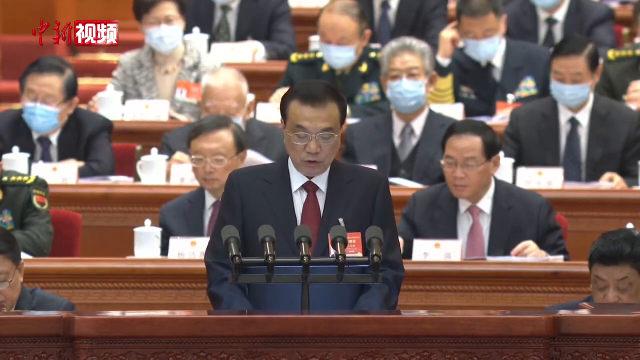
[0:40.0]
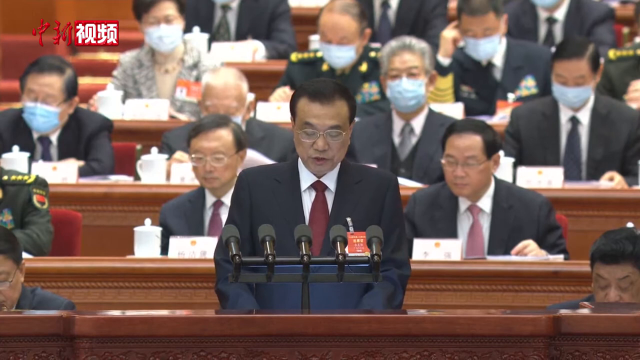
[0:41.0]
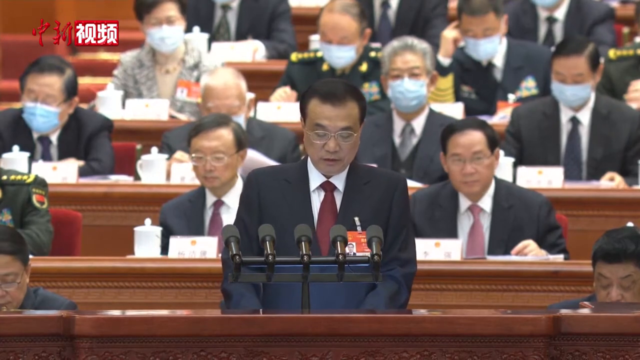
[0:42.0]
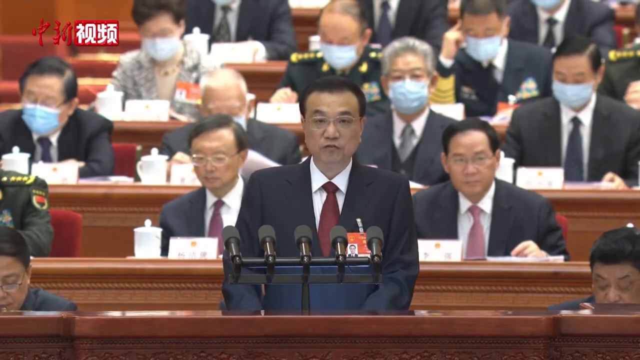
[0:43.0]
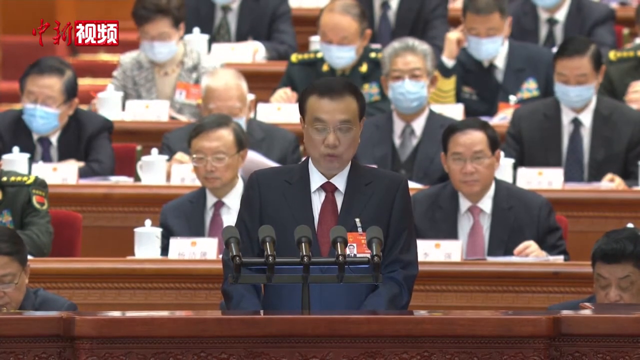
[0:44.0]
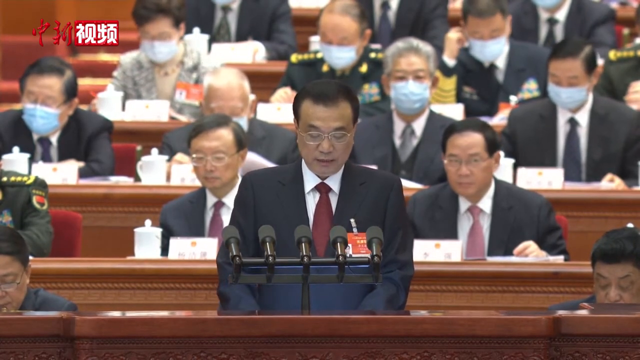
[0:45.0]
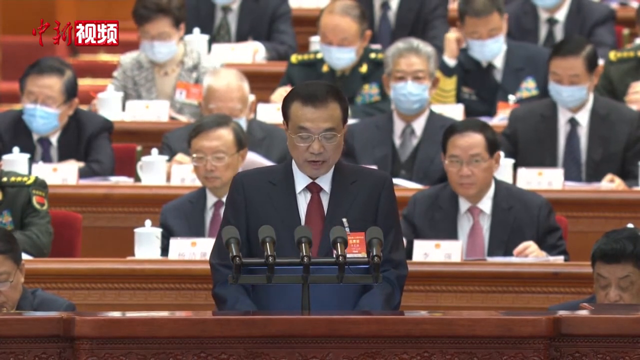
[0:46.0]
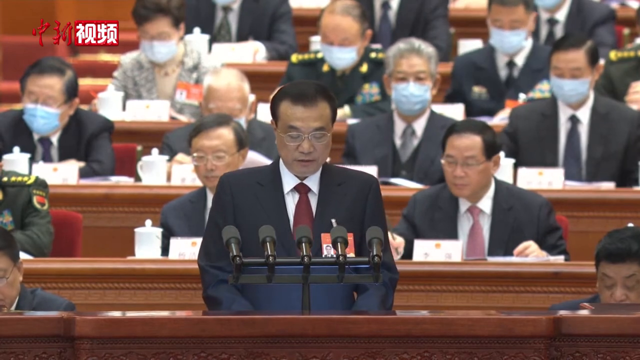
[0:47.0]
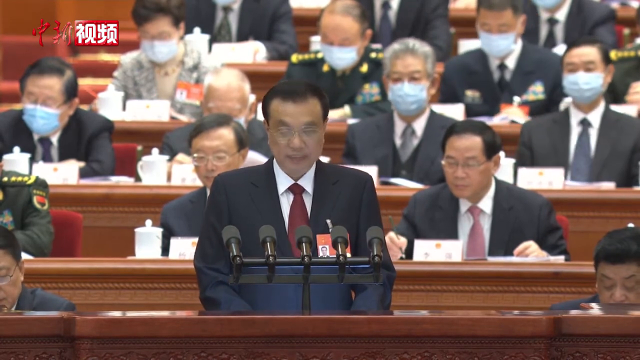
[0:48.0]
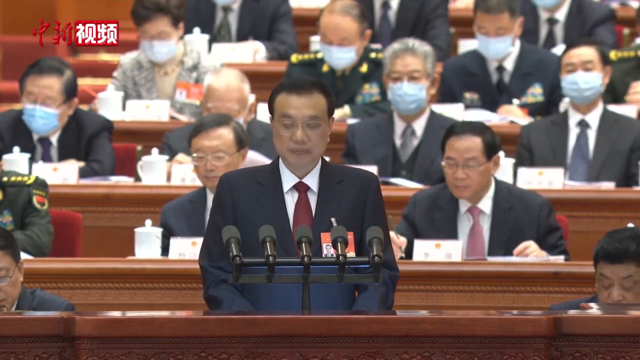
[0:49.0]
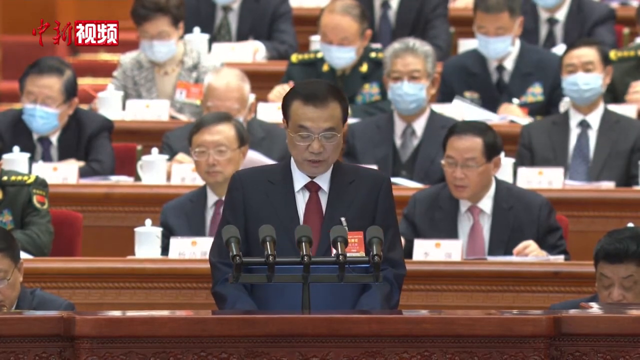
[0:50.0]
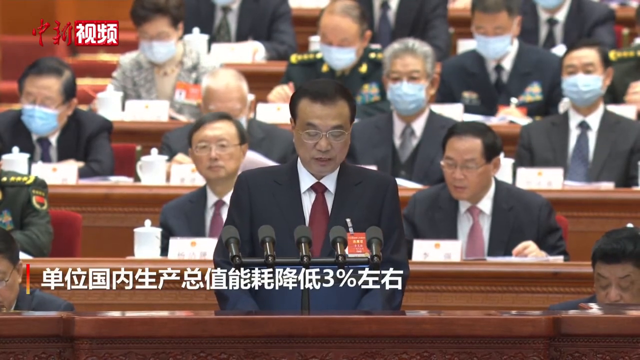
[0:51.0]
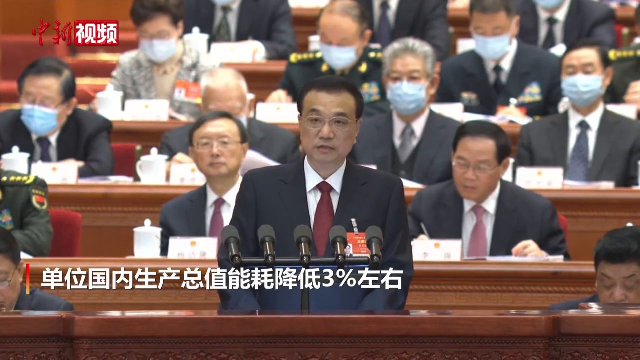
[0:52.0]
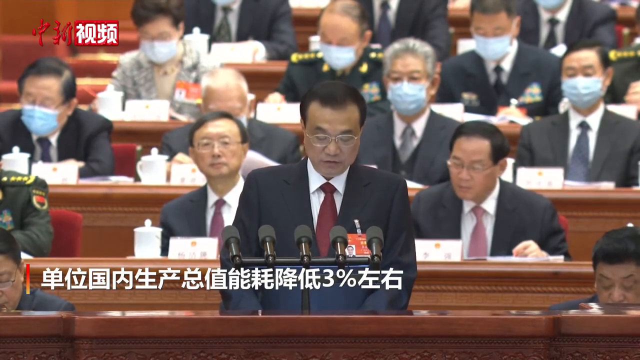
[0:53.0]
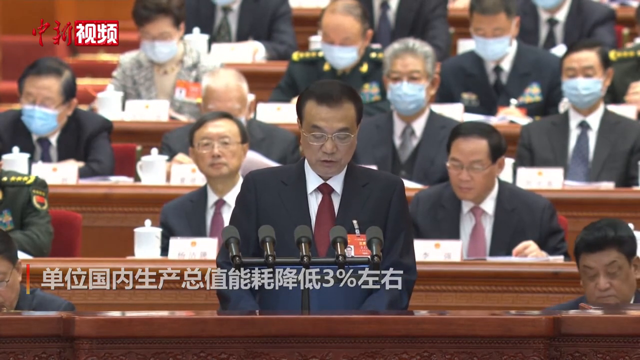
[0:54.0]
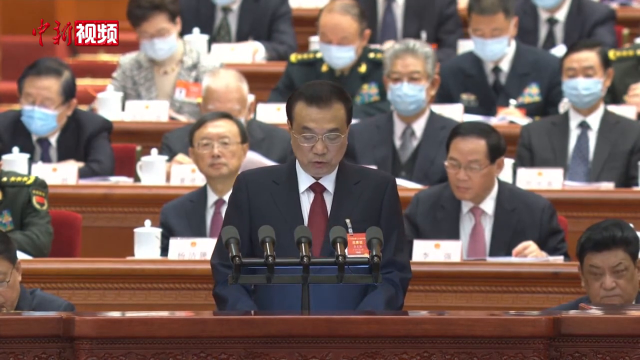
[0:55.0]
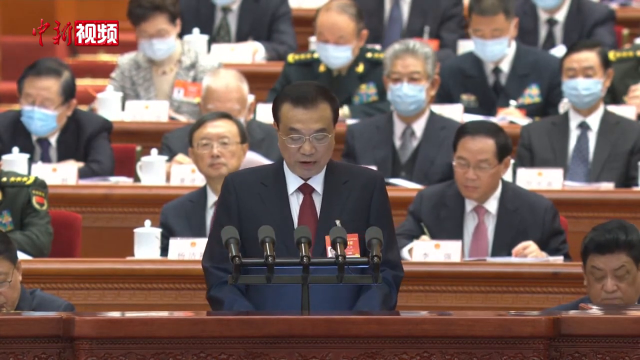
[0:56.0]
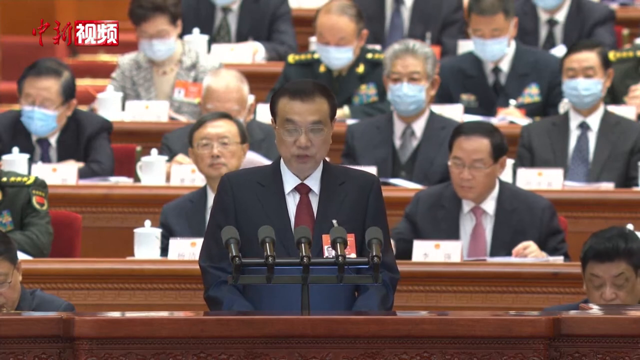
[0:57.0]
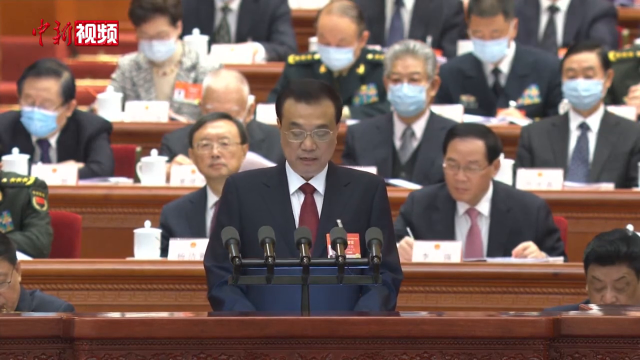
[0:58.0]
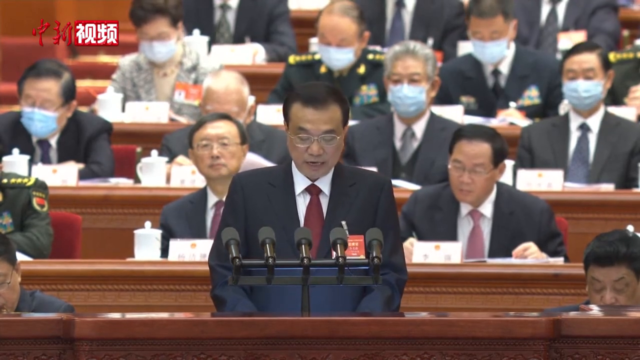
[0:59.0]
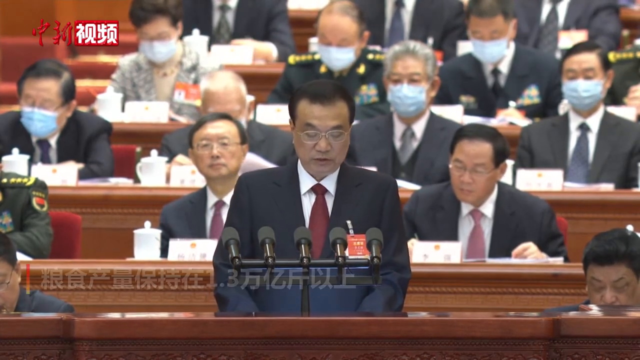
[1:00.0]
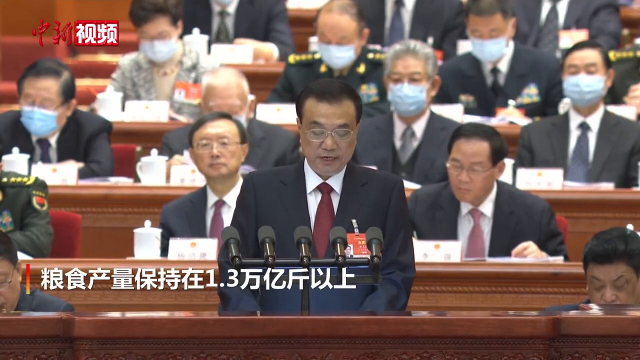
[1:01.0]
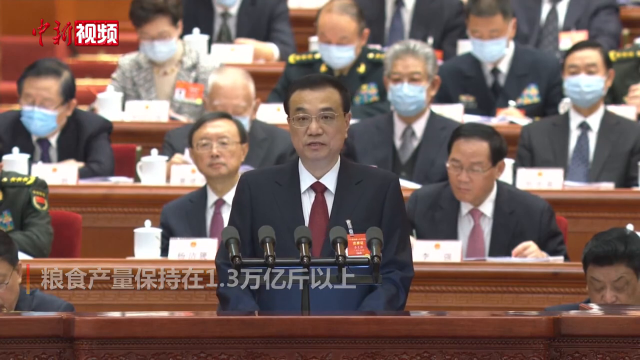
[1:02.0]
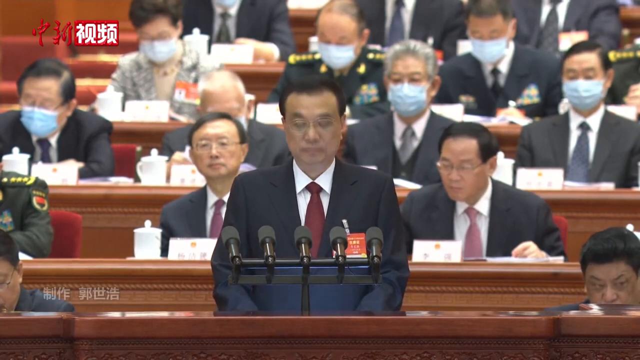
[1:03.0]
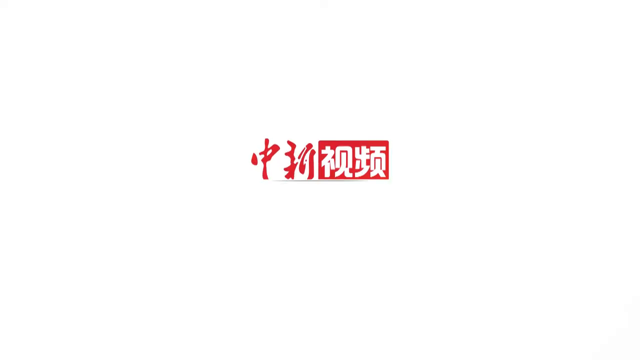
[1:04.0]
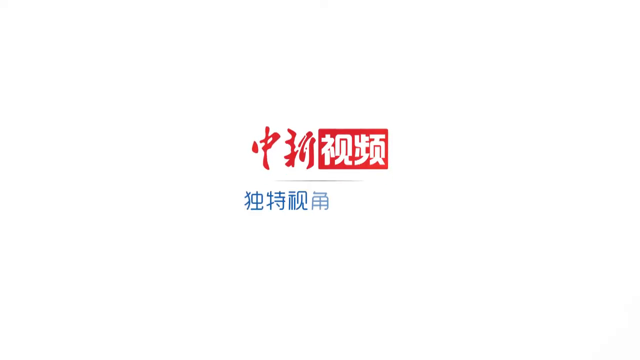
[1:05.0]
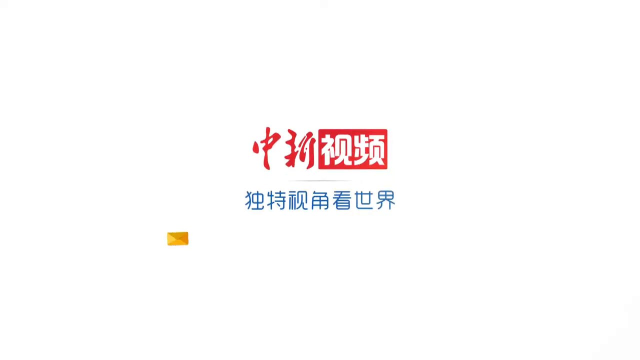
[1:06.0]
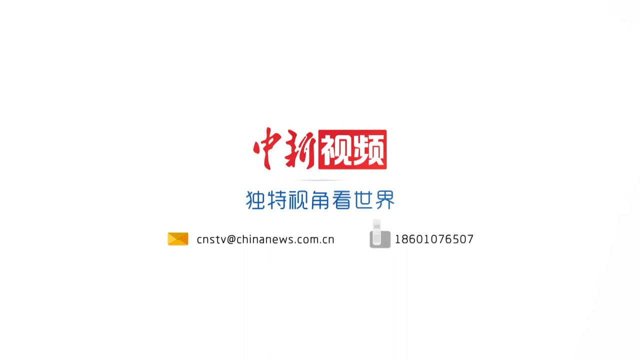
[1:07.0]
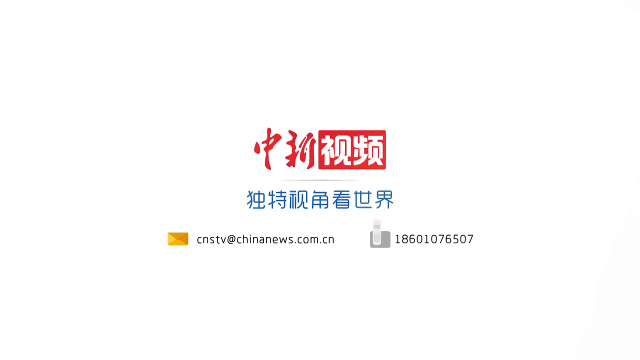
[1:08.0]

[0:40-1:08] A man speaks before a large group of people and appears totally immersed in his words. He looks down at some notes in front of him, or maybe an iPad, and looks back up at his audience as he speaks. The people behind him all wear work attire; there appear to be men and women sitting in rows of desks. Some wear face masks and some have no face covering. All of the men appear to be wearing black suit jackets and neckties. Text in a global language pops up in the upper left and lower left corners of the video. The man continues speaking, and then a widescreen with global language pops up in the middle of the screen, showing that the video is from "cnstv@chinanews.com".